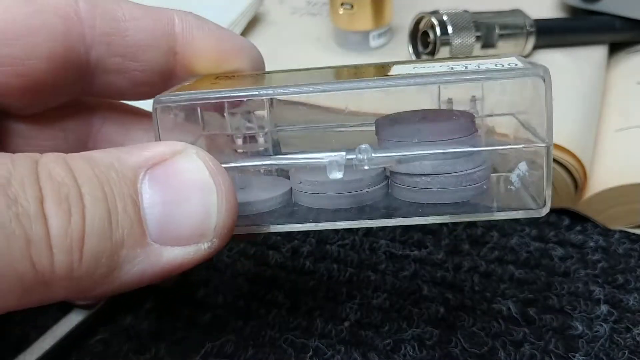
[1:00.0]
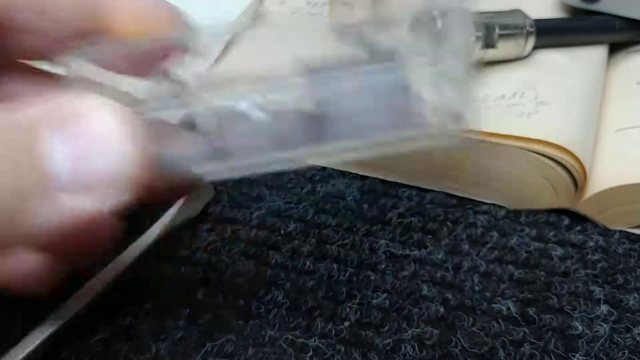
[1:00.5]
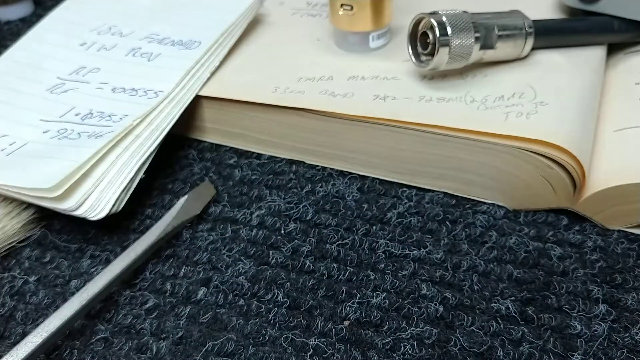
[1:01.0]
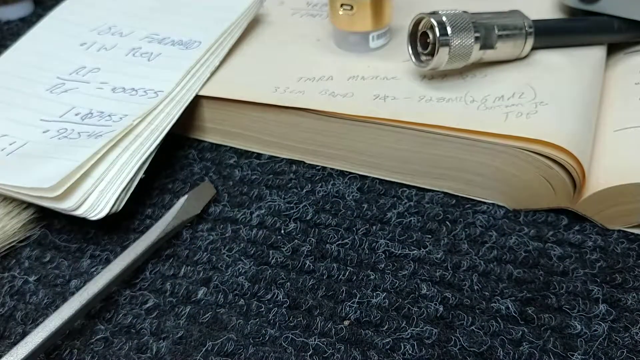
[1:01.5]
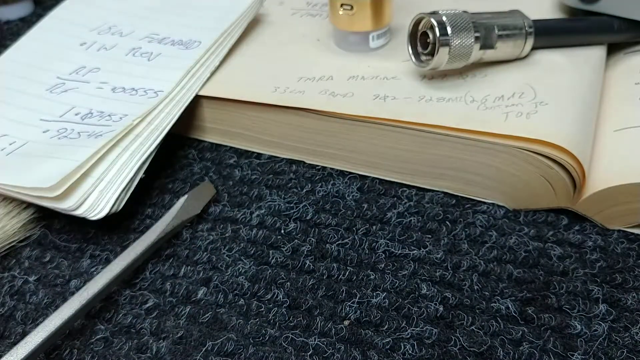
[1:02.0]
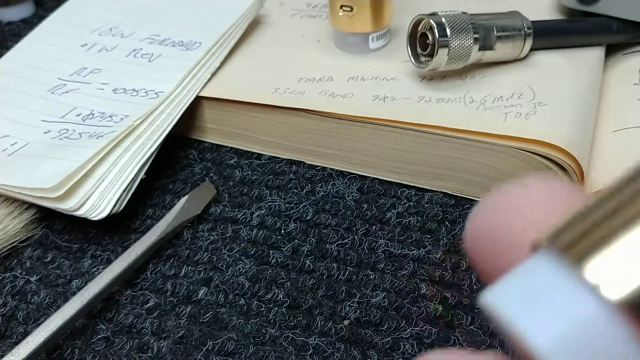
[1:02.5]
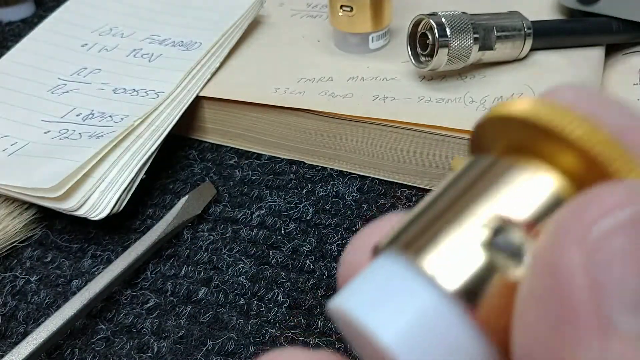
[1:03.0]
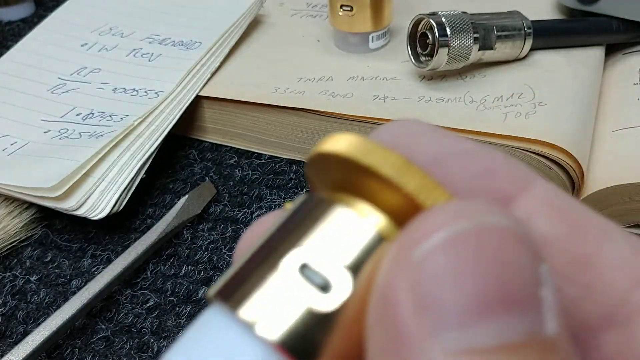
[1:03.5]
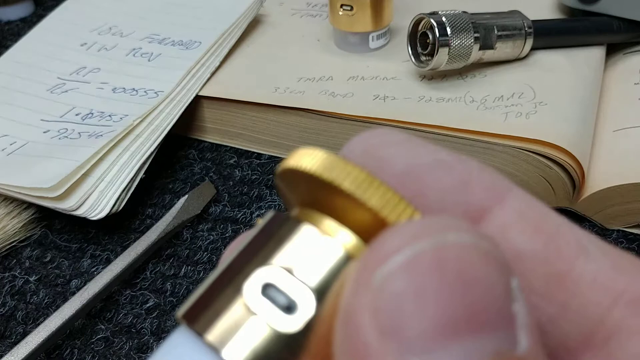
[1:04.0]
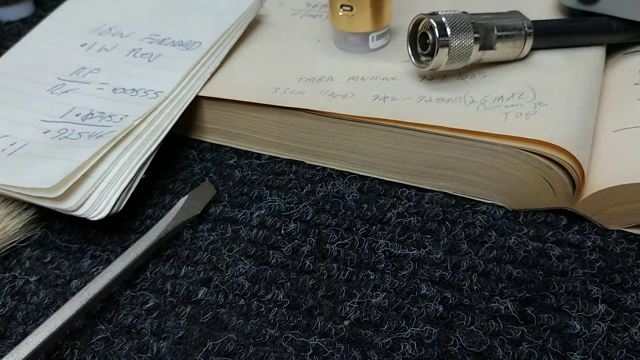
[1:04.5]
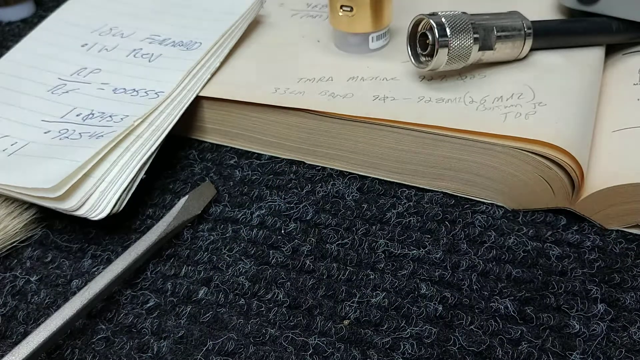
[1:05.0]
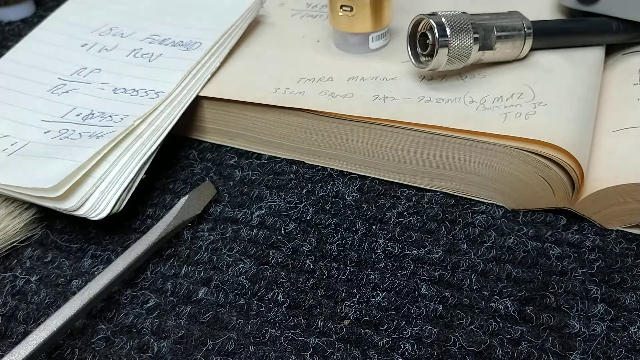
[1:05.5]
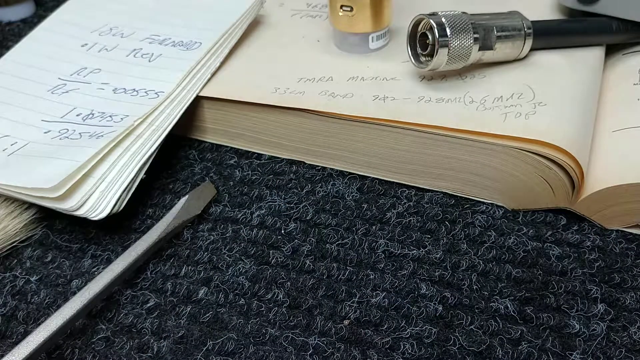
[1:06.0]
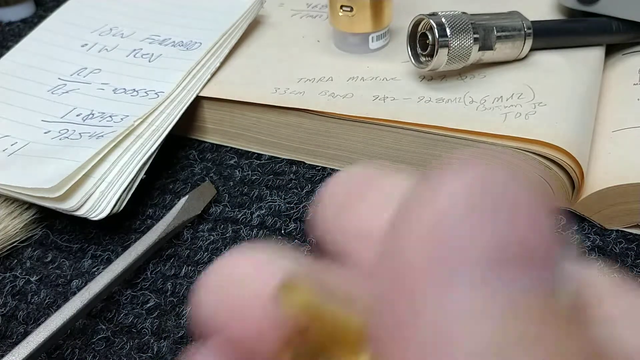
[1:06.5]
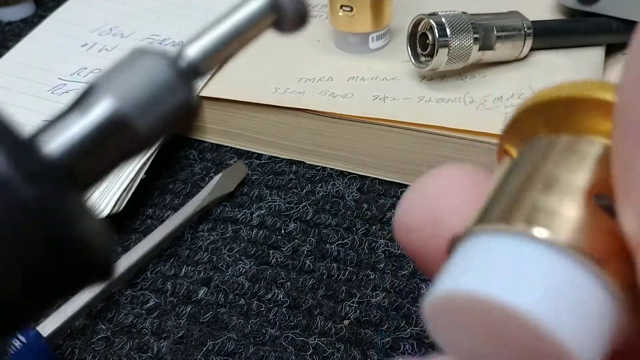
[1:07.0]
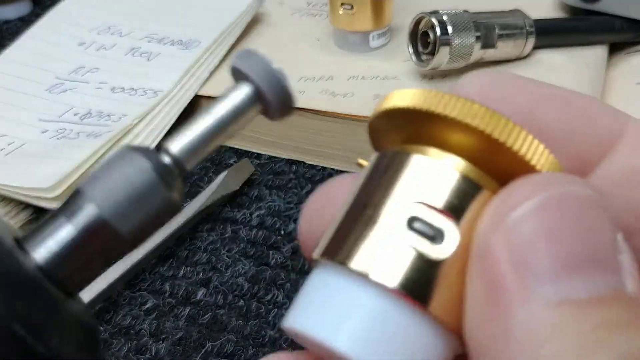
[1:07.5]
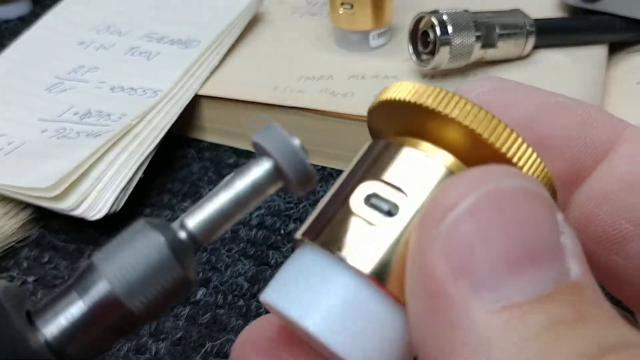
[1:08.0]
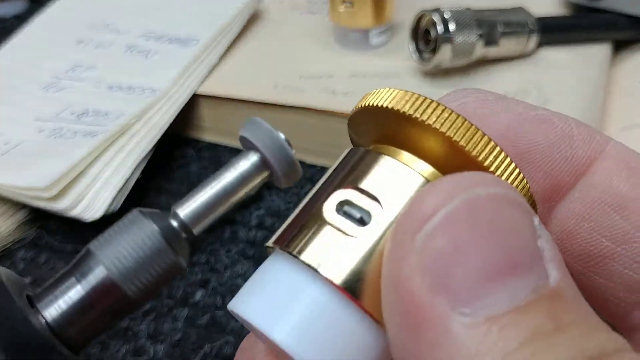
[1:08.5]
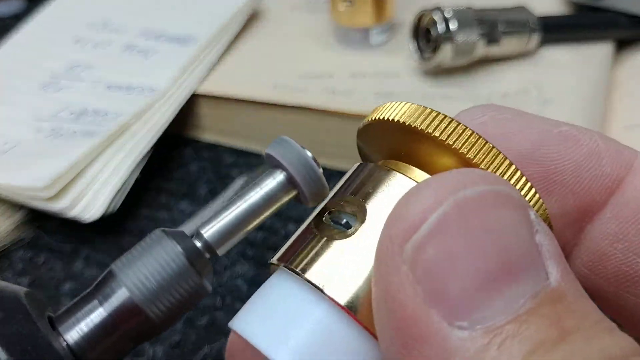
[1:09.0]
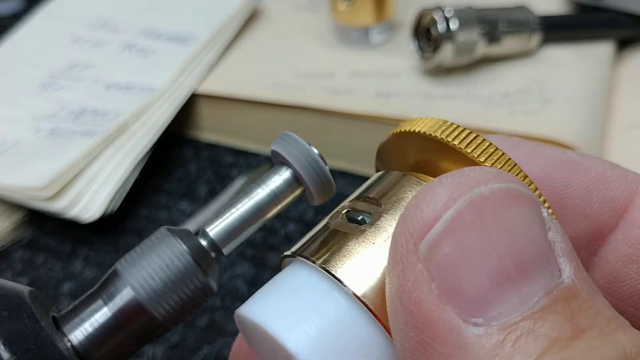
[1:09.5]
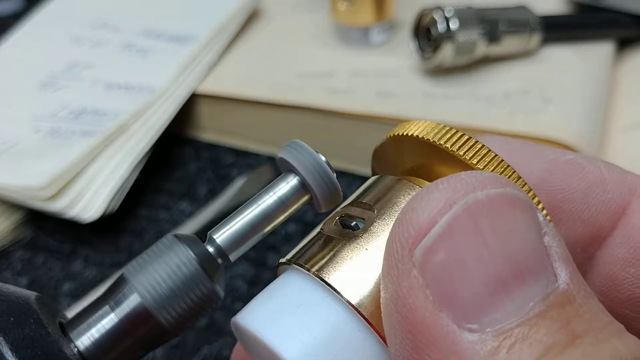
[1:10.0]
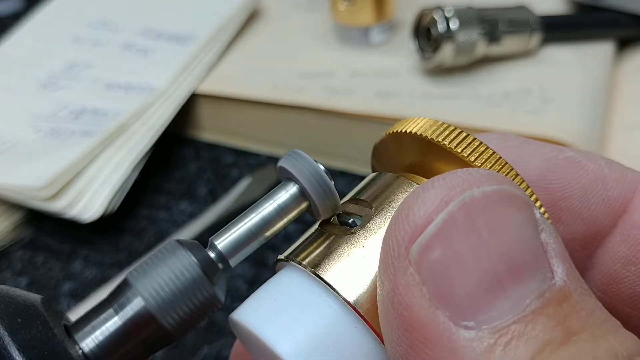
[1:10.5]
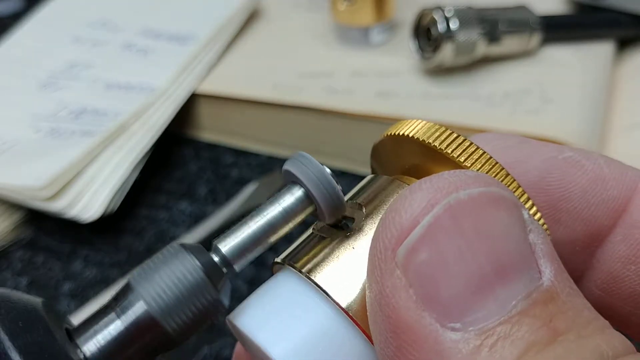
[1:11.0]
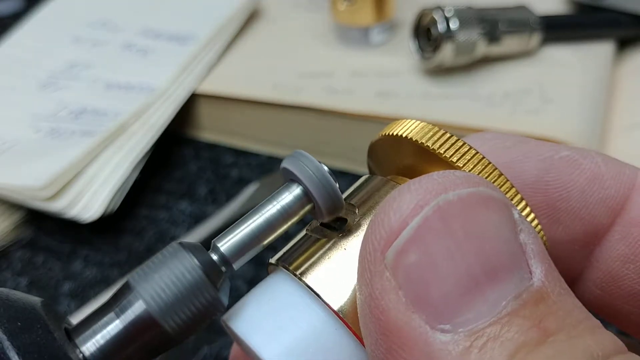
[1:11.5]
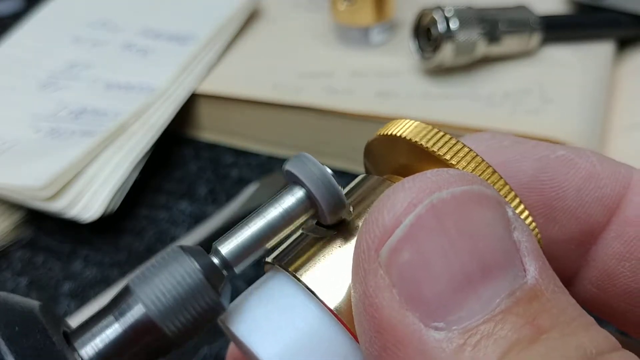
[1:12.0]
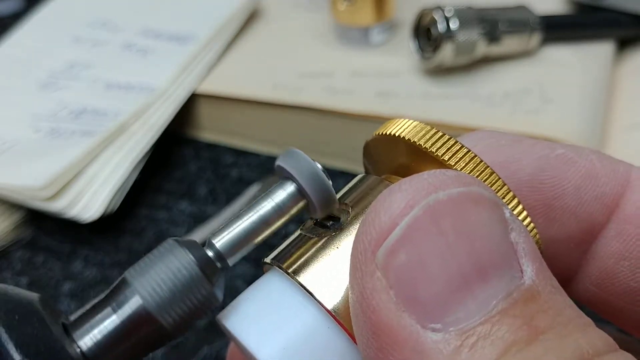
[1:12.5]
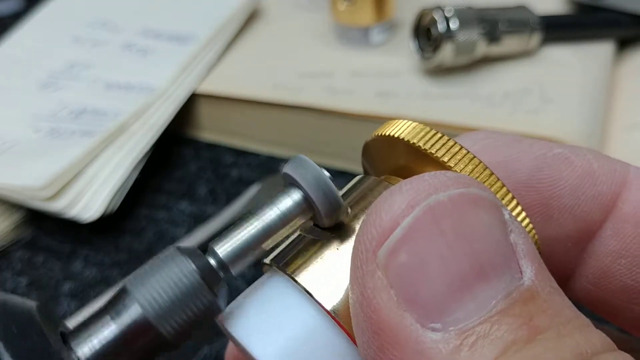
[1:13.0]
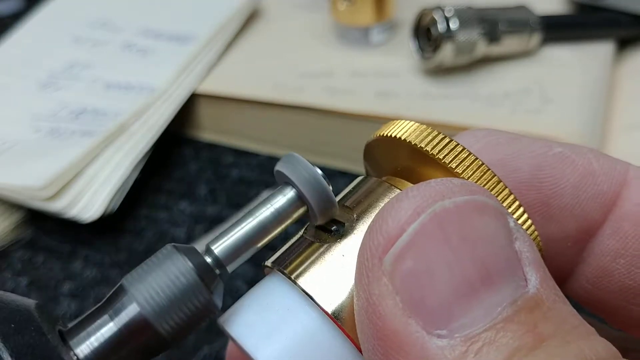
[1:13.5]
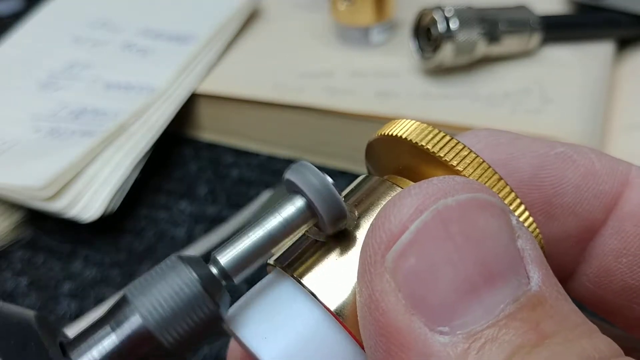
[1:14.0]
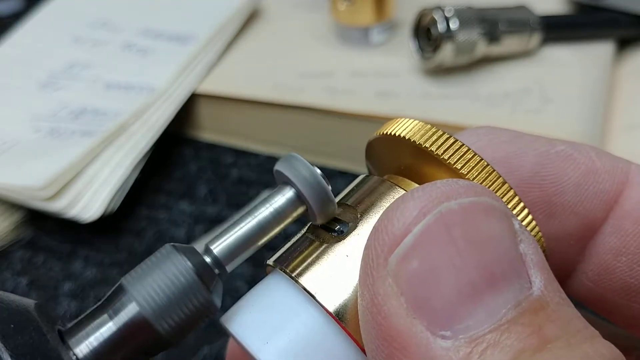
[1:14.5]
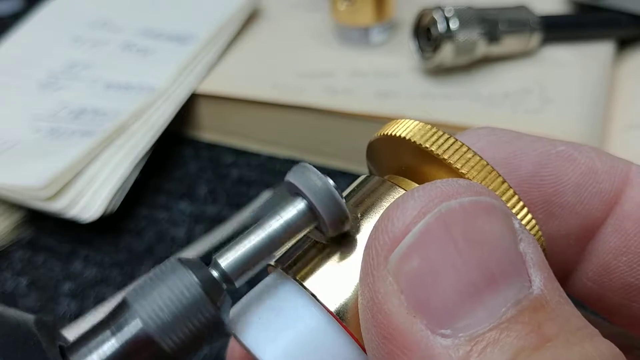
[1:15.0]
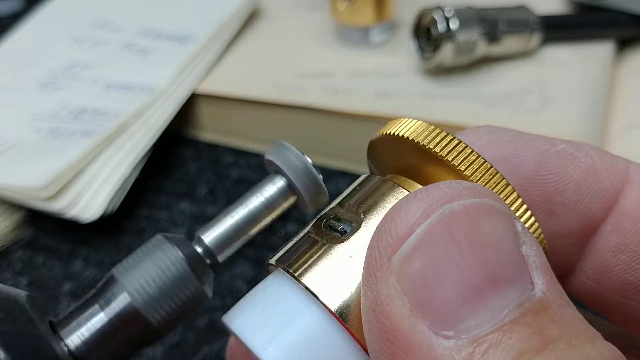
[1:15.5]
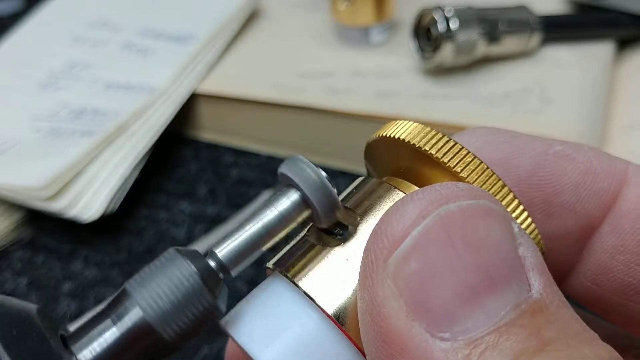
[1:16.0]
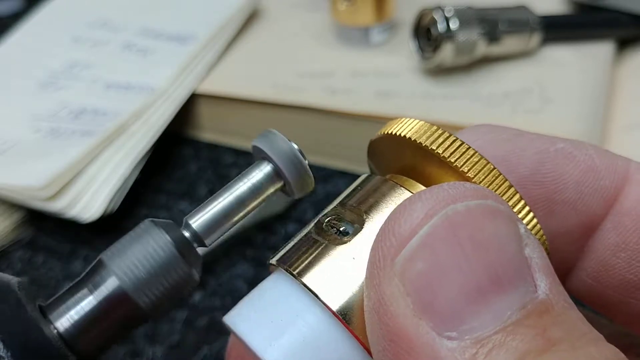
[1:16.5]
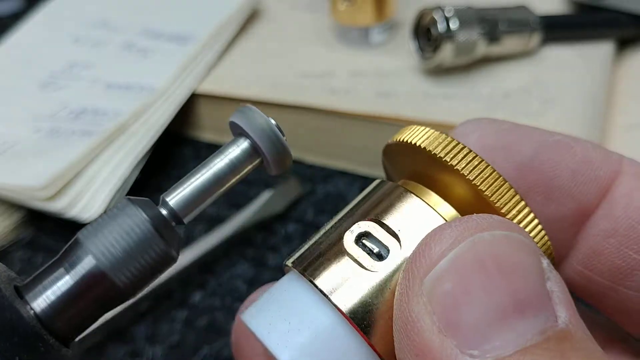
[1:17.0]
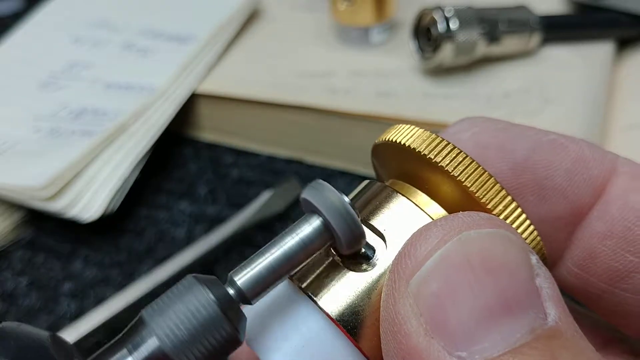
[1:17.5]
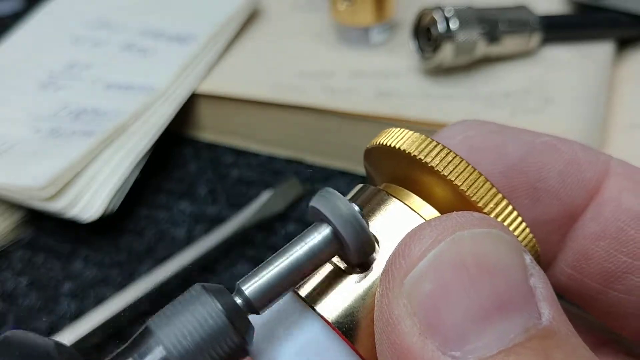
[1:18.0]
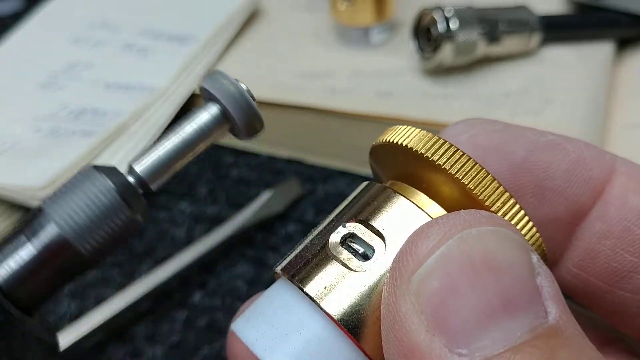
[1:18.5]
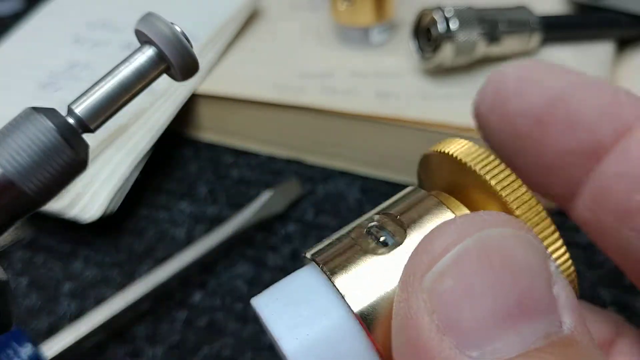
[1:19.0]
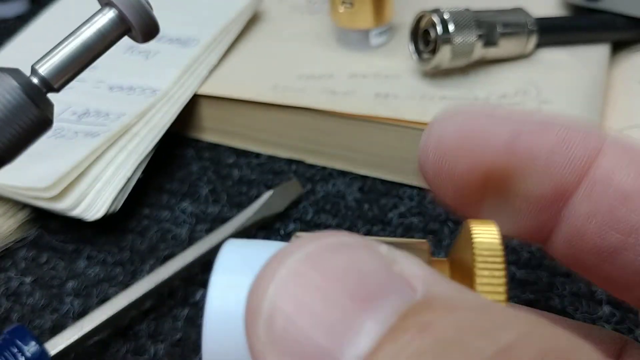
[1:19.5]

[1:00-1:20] A plastic box holds what look like discs inside. The person holding it takes it away, revealing an open book on a gray carpet with two tools on top of the book: one looks like a hose with a silver metal attachment, and the other looks like a container with gold plating wrapped around it. There is also a gray screwdriver and a notepad with some scribbling. The person then grabs an object that looks like it has a gold gear on top and an attachment that also looks like a gold metal cylinder. He shows it briefly and then pulls it away from the camera.